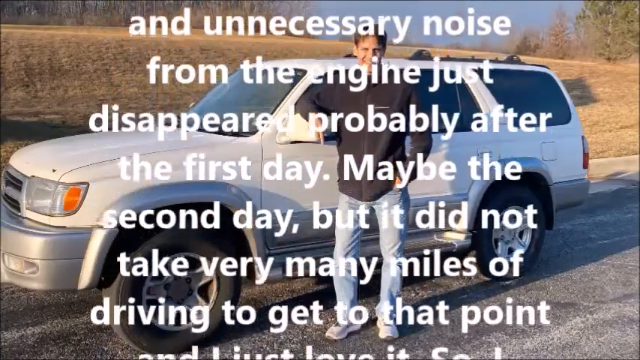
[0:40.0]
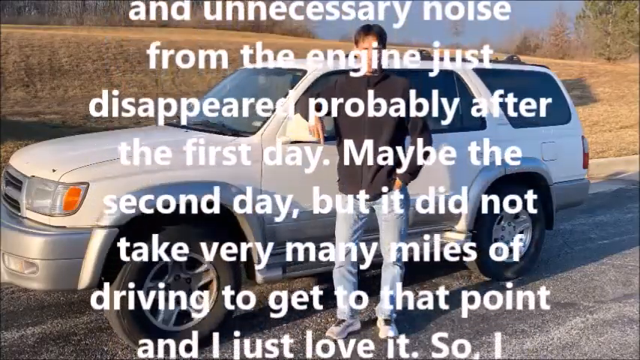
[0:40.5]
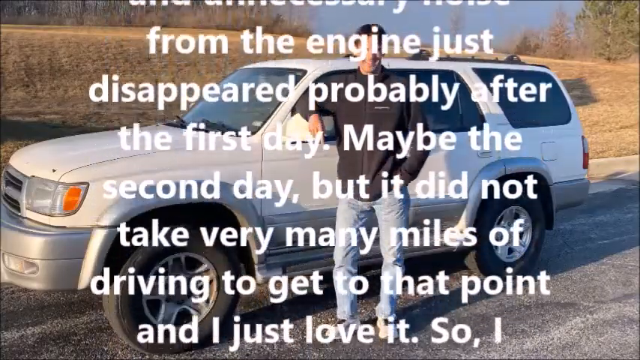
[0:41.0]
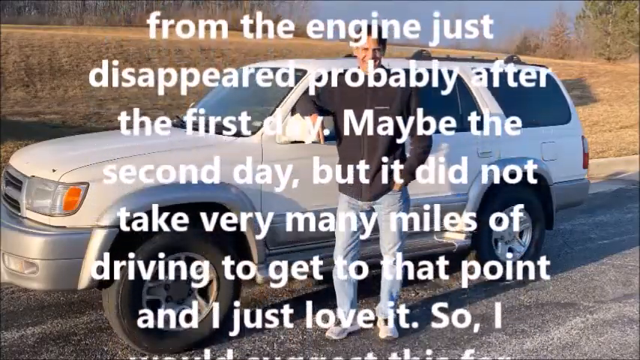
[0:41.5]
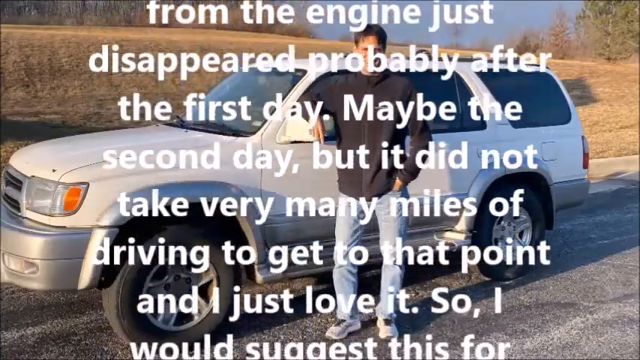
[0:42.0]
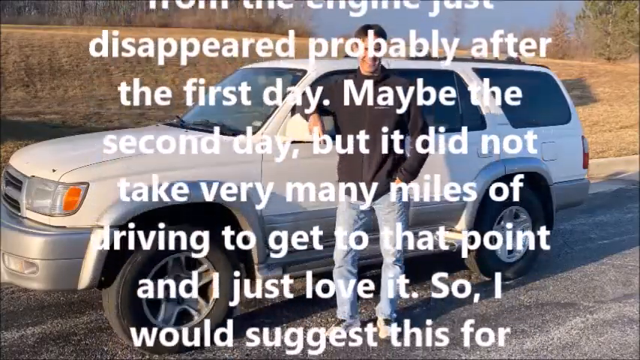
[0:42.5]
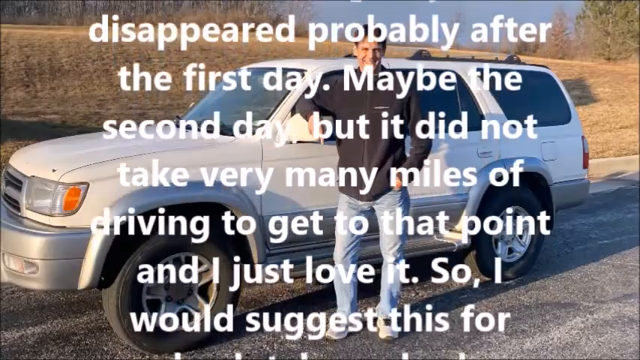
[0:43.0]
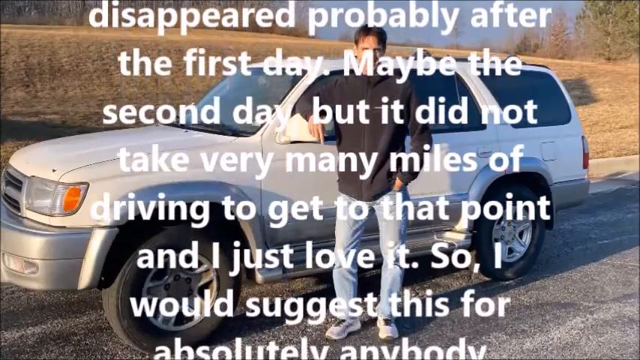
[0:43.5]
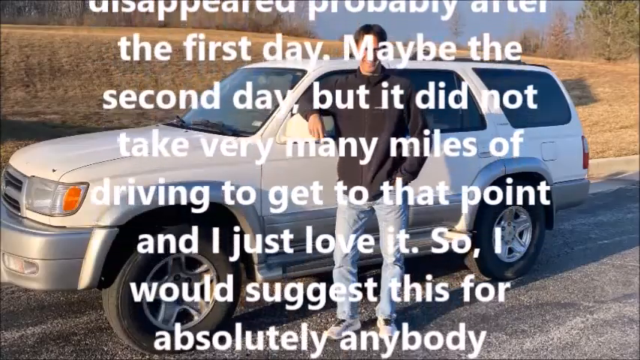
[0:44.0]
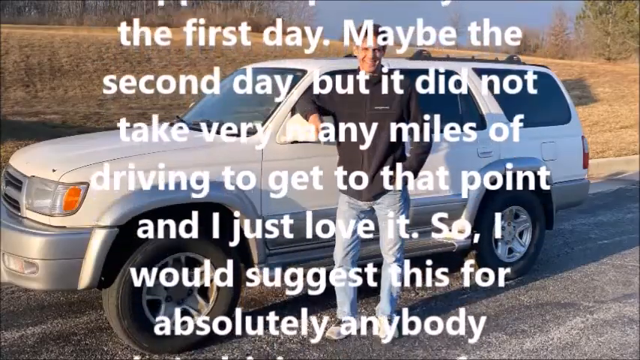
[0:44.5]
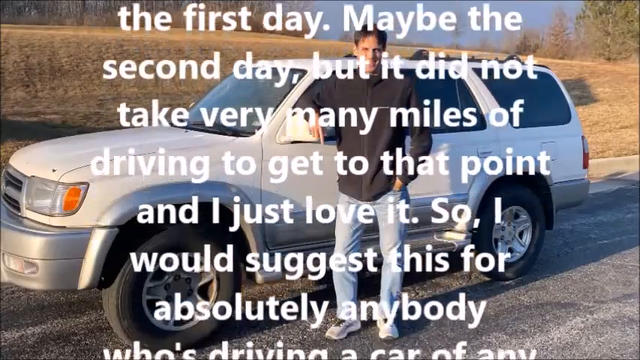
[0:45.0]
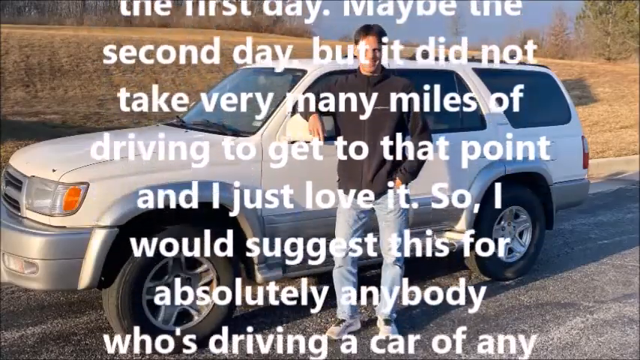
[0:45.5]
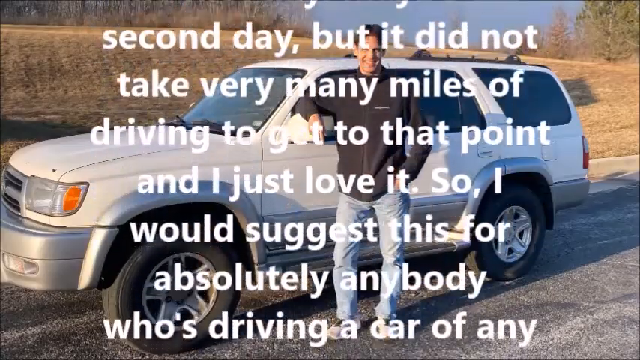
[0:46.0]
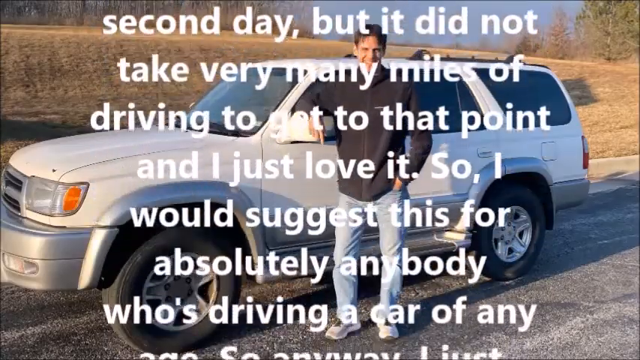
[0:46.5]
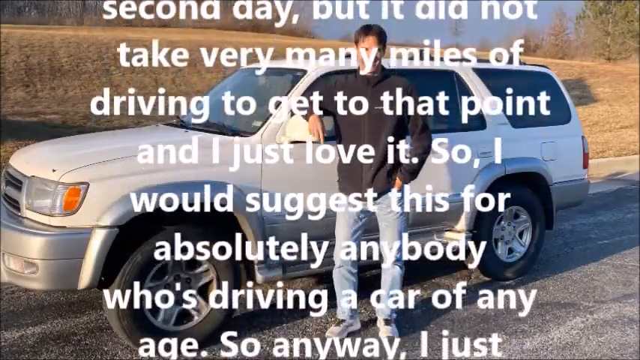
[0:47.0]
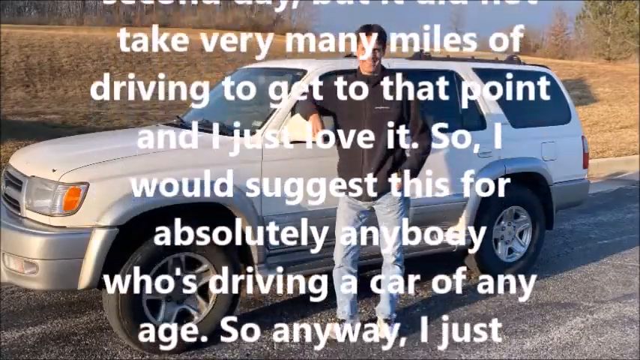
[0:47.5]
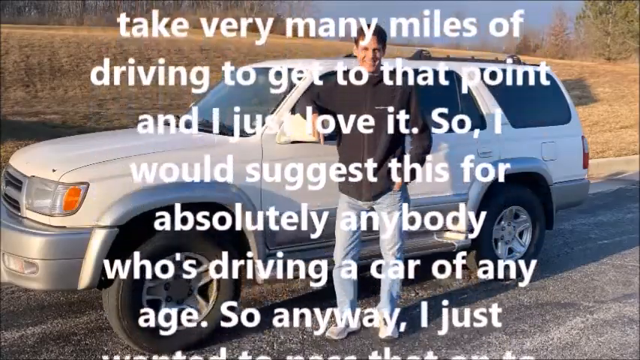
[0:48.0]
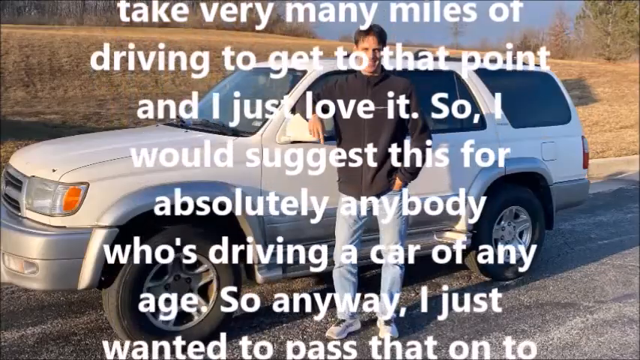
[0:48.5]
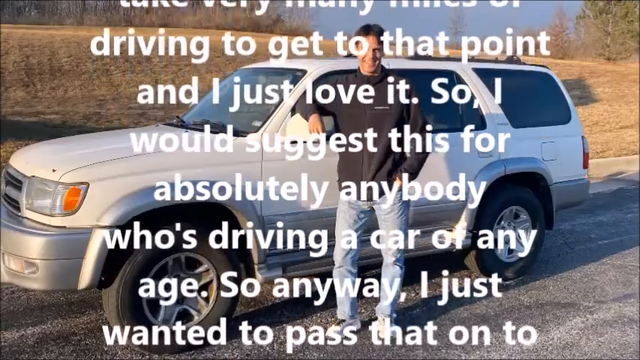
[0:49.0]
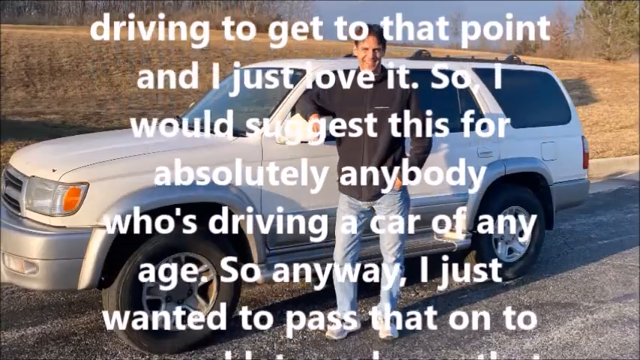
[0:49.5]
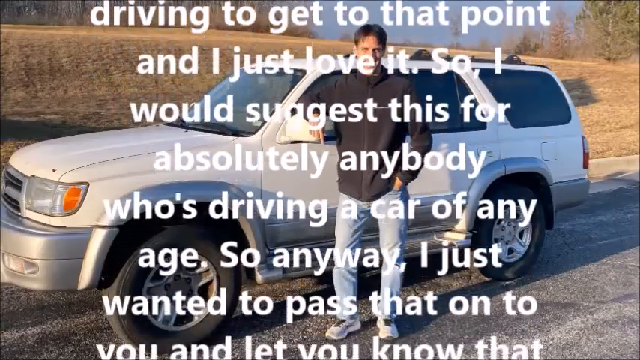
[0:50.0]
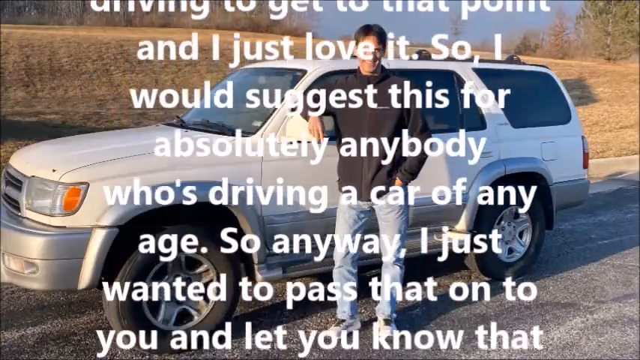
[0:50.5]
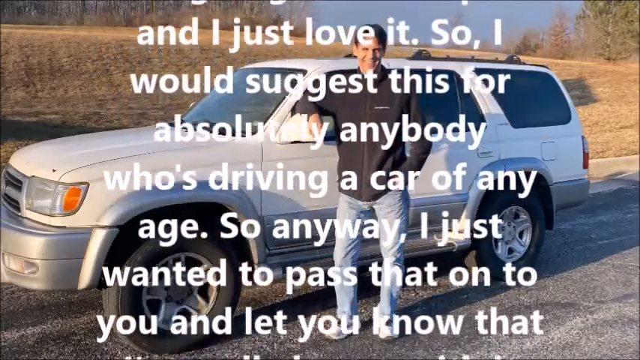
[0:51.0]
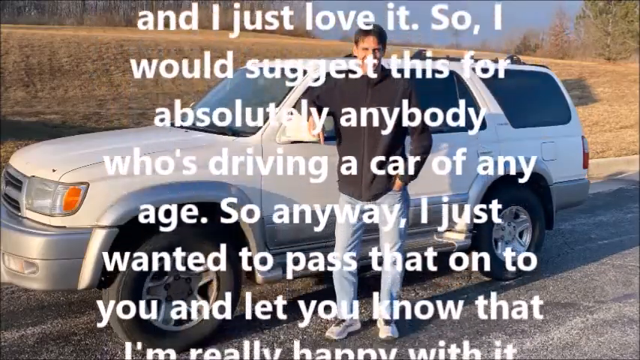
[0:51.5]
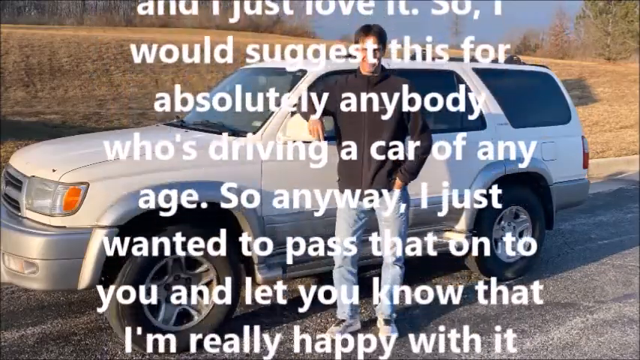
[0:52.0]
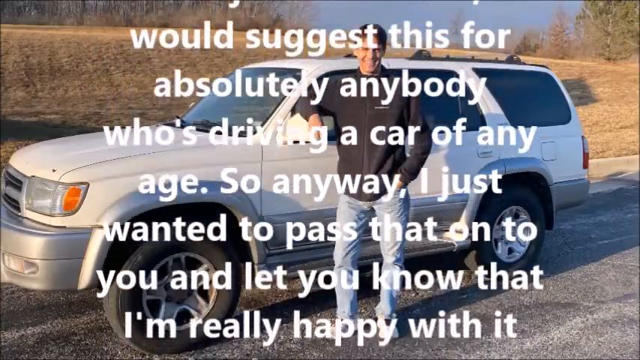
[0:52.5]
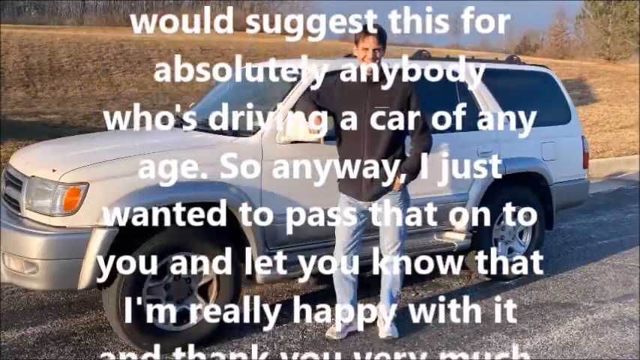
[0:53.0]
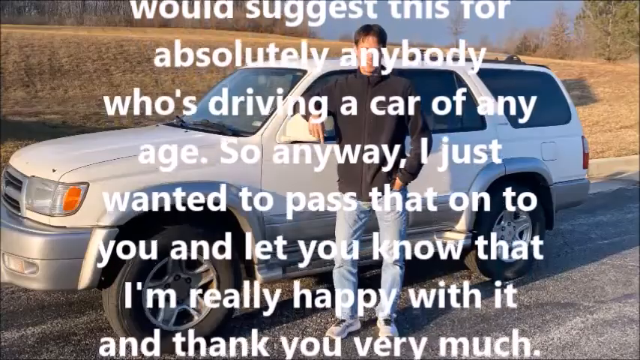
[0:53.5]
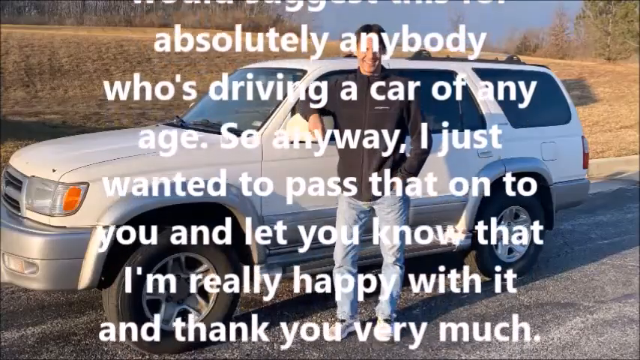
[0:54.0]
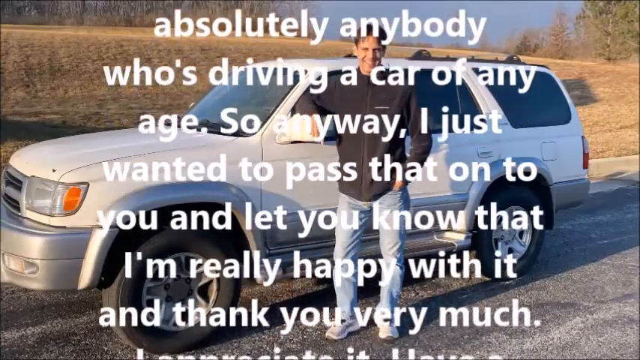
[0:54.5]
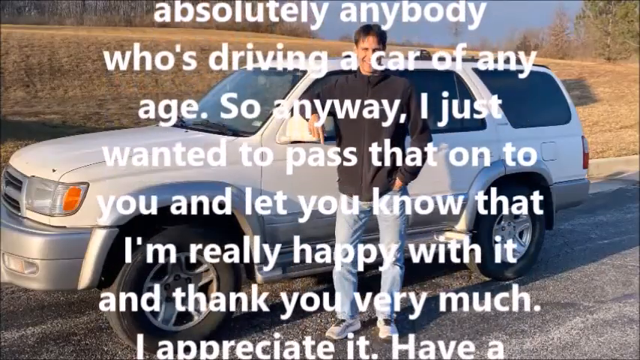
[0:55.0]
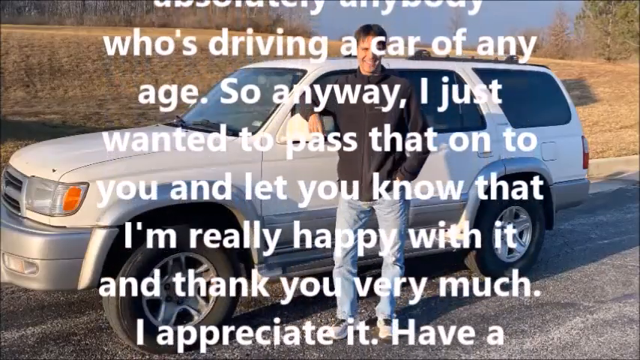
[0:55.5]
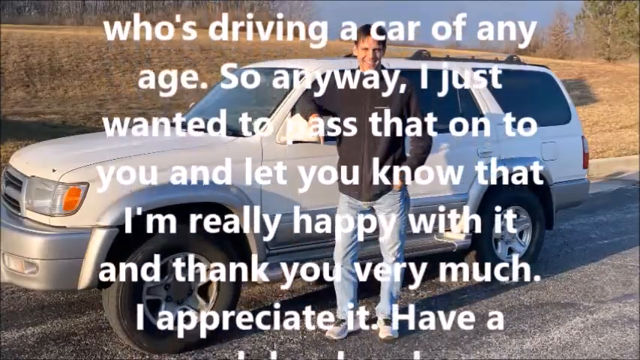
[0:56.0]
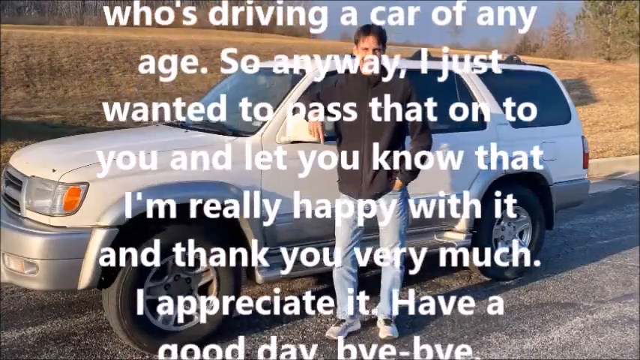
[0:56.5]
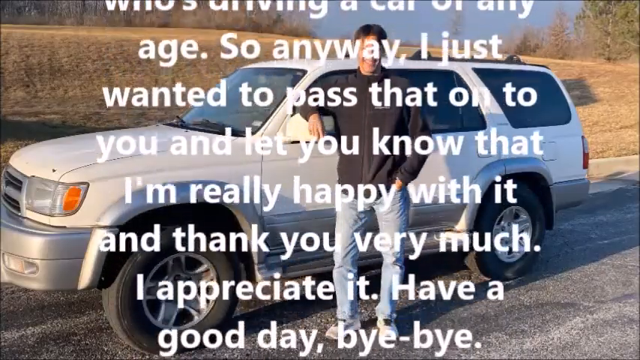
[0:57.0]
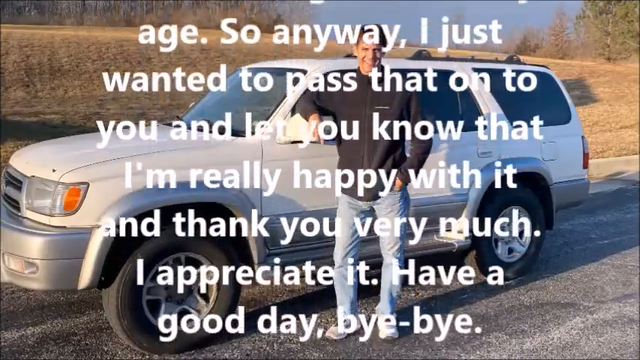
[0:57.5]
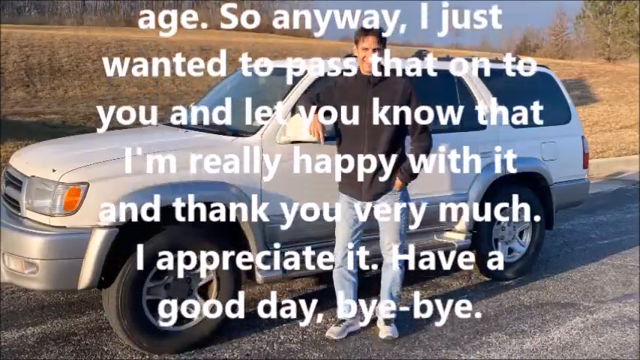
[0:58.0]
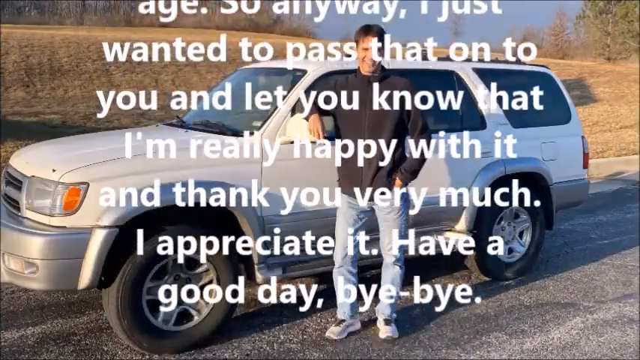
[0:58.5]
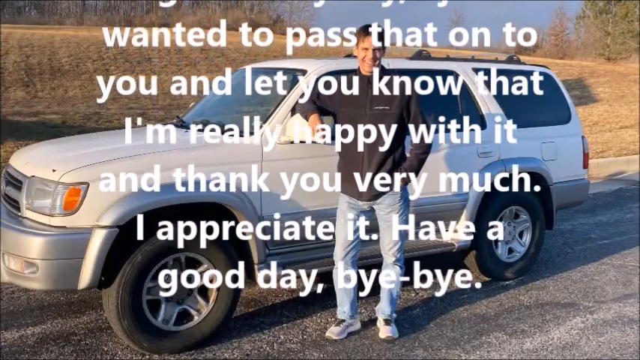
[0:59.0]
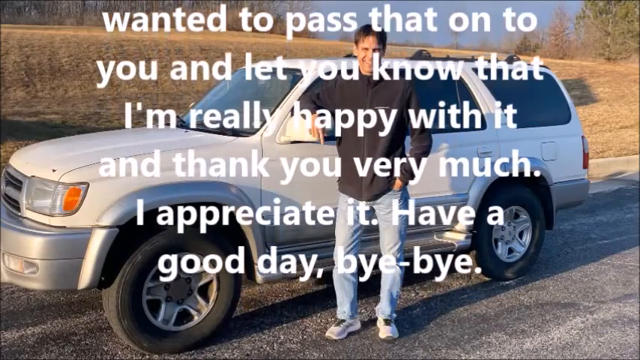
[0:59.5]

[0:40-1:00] A man stands in front of a white SUV with his arm on the driver's side door mirror. He wears blue jeans and a black zip-up jacket, has brown hair, and is smiling. The car is on what seems to be a rough asphalt road or parking lot, possibly gravel. Behind it is a hill with short-cut brown grass, with trees along the ridge, possibly a small forested area, and blue sky beyond. White text scrolls from the bottom to the top across the front of the video, reading: "Maybe the second day, but it did not take very many miles of driving to get to that point and I just love it. So I would suggest this for absolutely anybody who is driving a car of any age. So anyway, I just wanted to pass that on to you and let you know that I am really happy with it and thank you very much. I appreciate it. Have a good day. Bye bye." That seems to be the end of the text, and it continues scrolling up afterward.